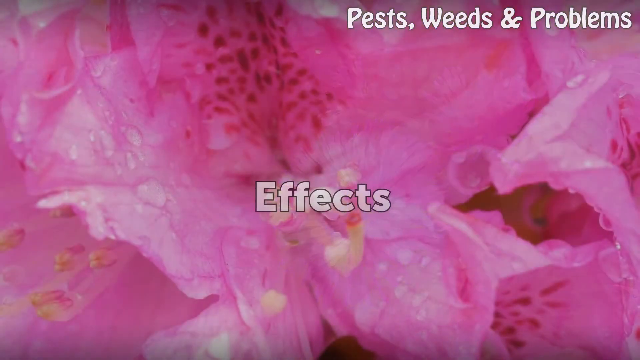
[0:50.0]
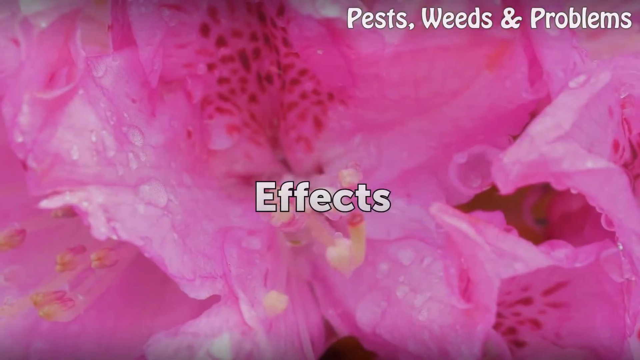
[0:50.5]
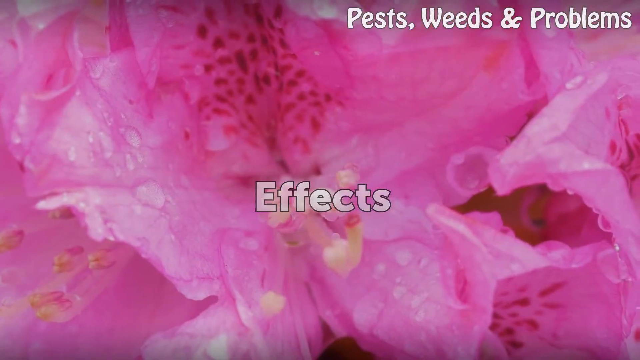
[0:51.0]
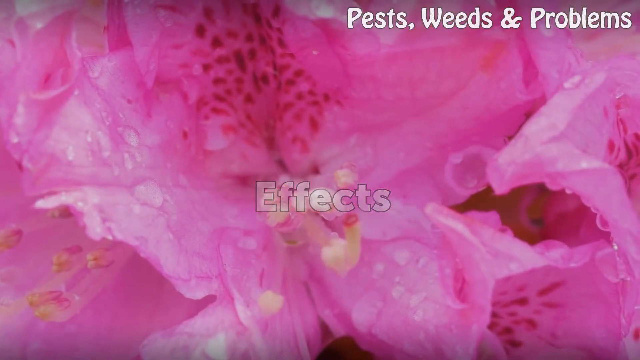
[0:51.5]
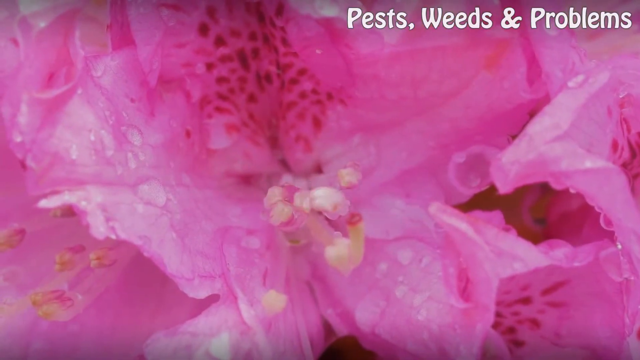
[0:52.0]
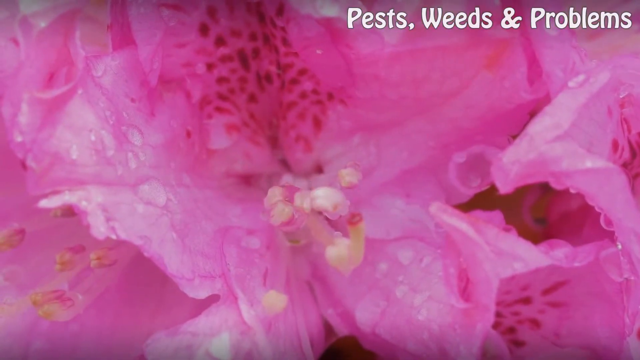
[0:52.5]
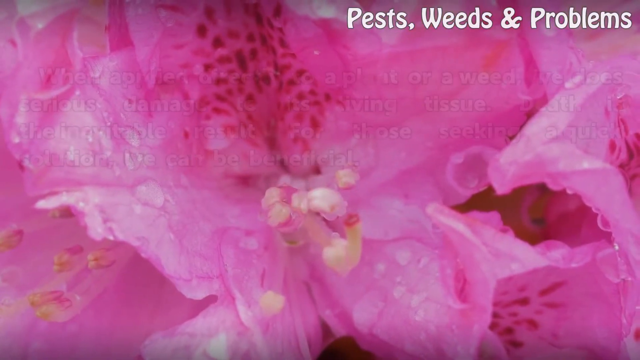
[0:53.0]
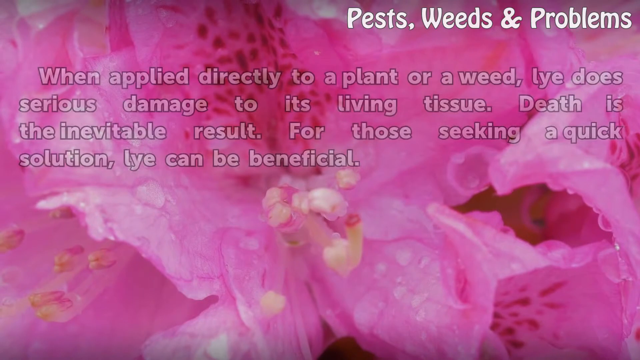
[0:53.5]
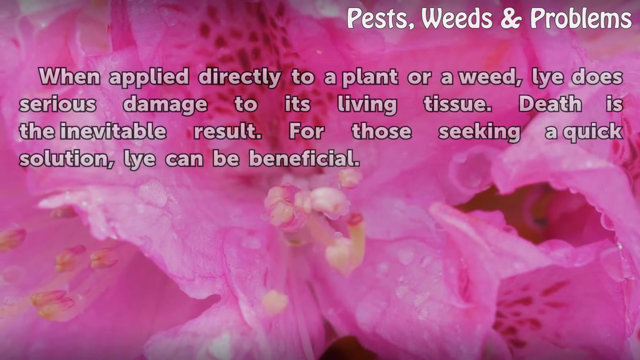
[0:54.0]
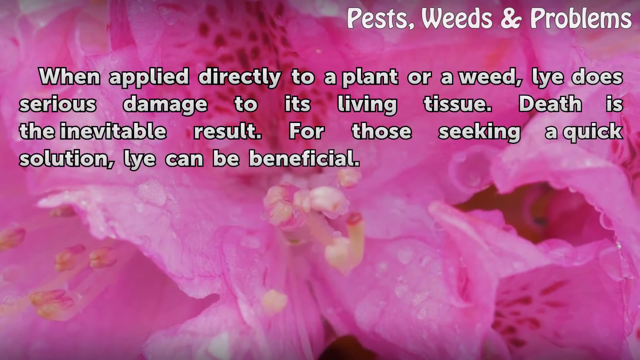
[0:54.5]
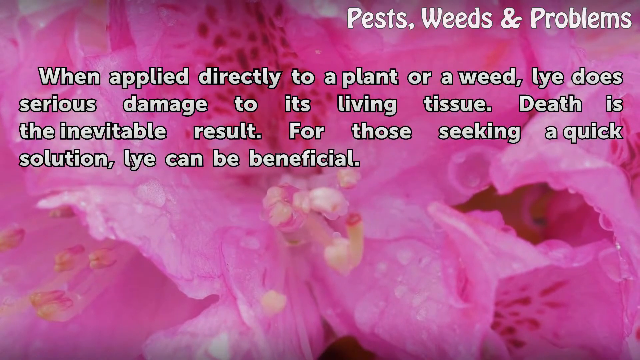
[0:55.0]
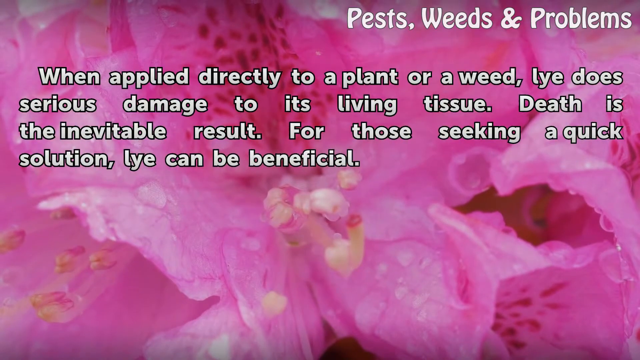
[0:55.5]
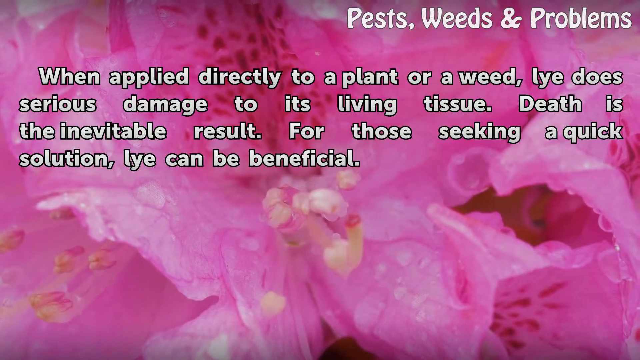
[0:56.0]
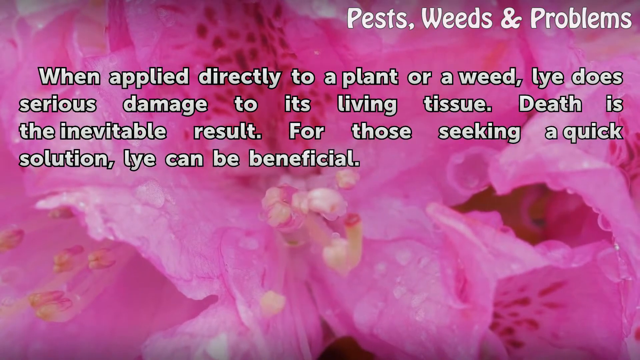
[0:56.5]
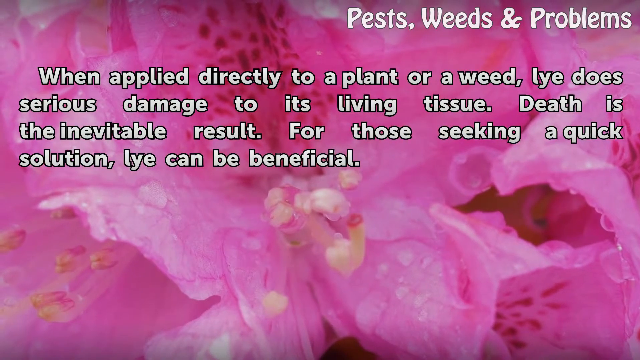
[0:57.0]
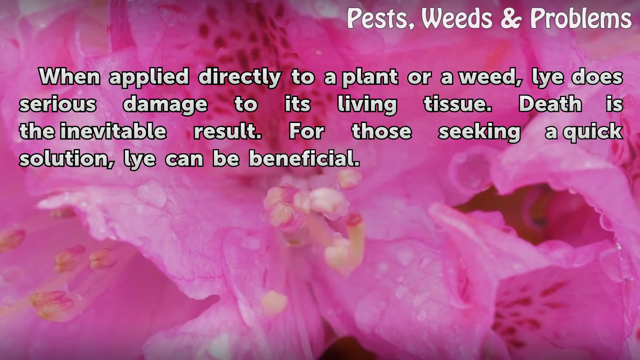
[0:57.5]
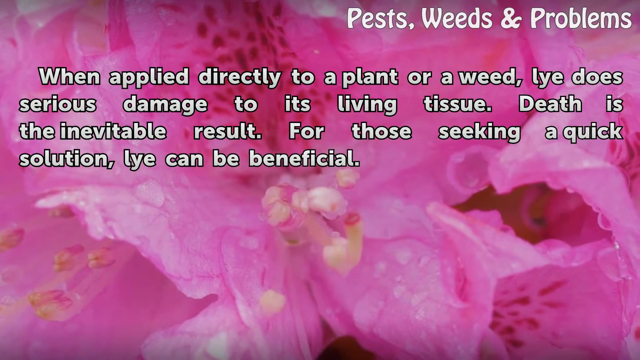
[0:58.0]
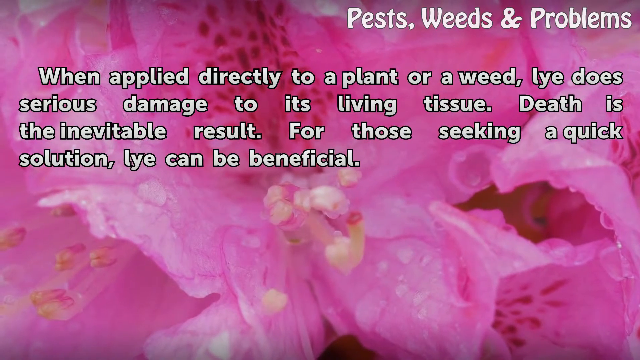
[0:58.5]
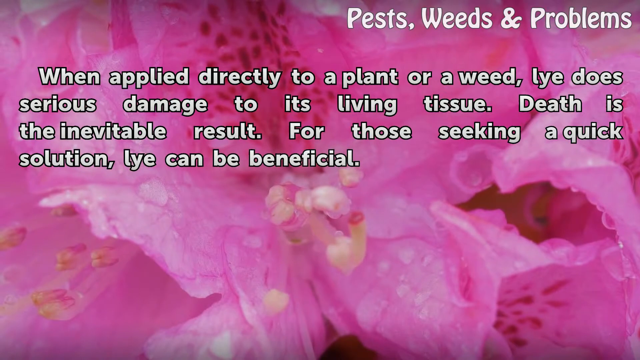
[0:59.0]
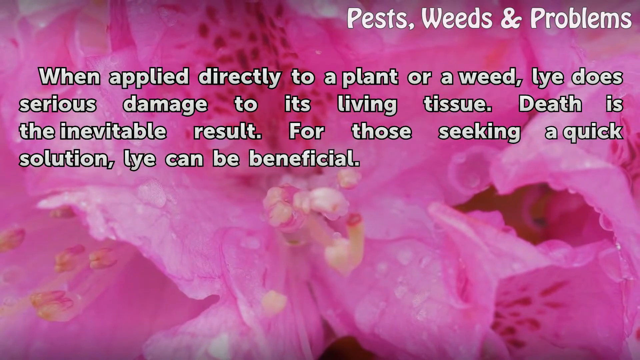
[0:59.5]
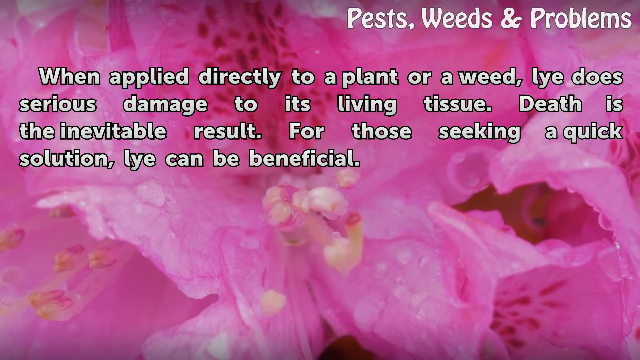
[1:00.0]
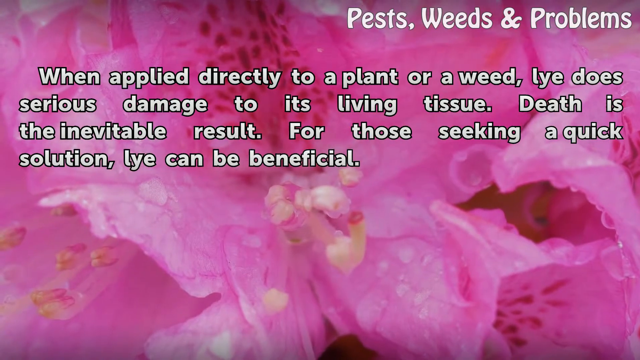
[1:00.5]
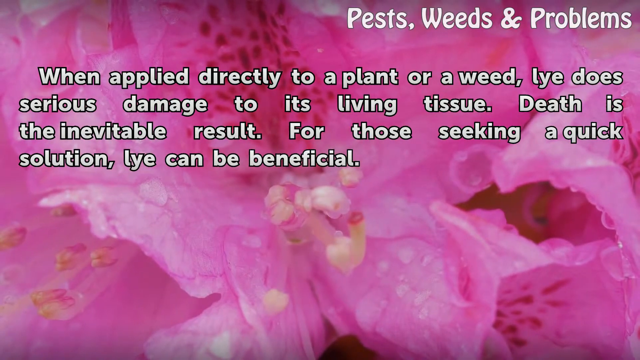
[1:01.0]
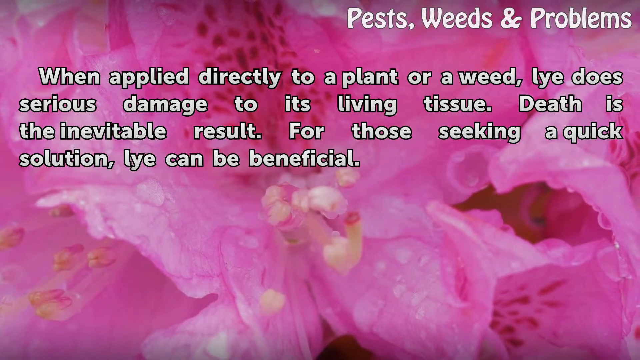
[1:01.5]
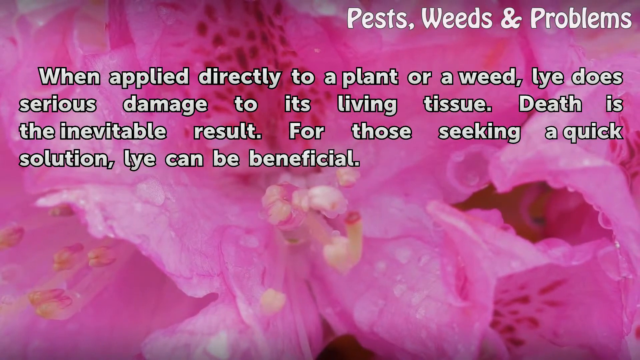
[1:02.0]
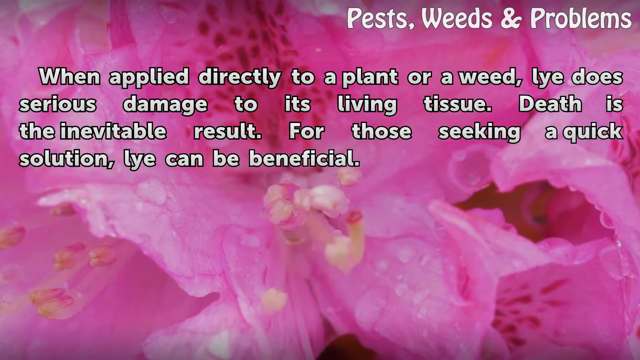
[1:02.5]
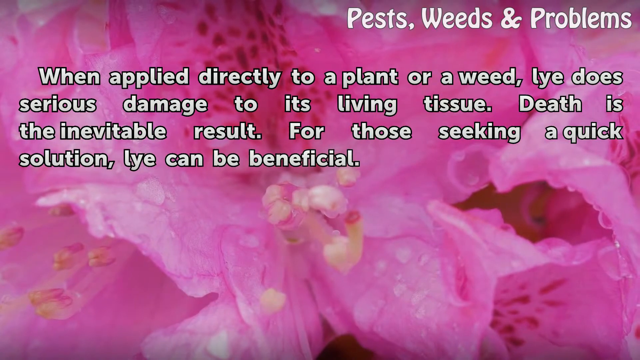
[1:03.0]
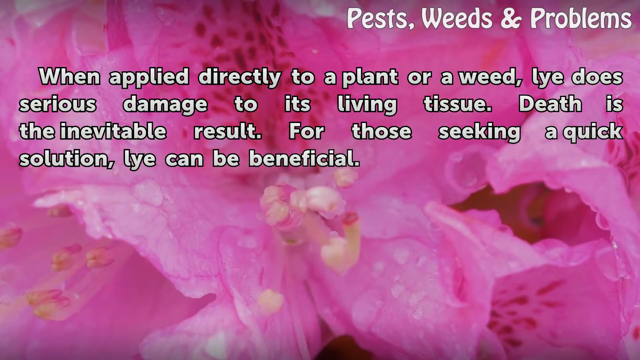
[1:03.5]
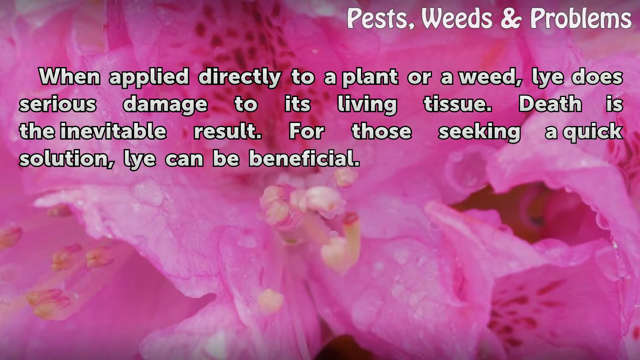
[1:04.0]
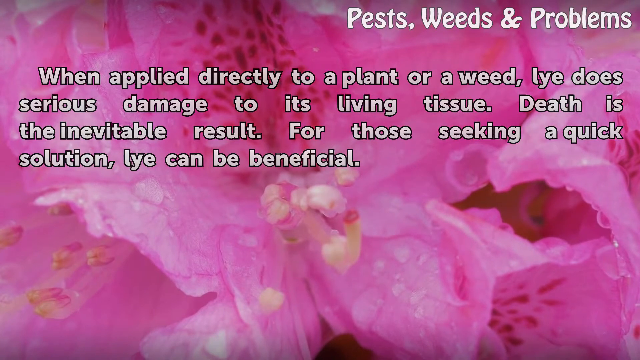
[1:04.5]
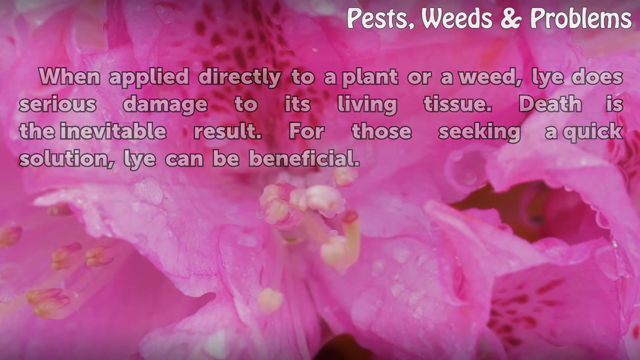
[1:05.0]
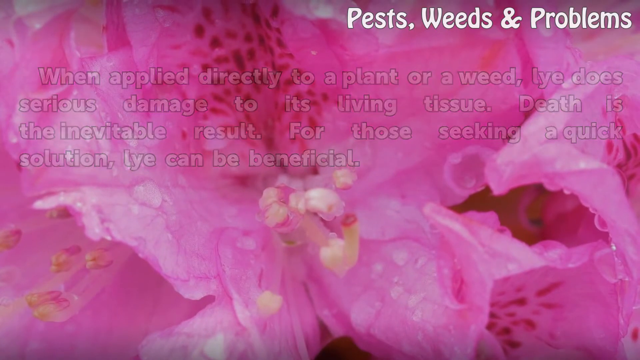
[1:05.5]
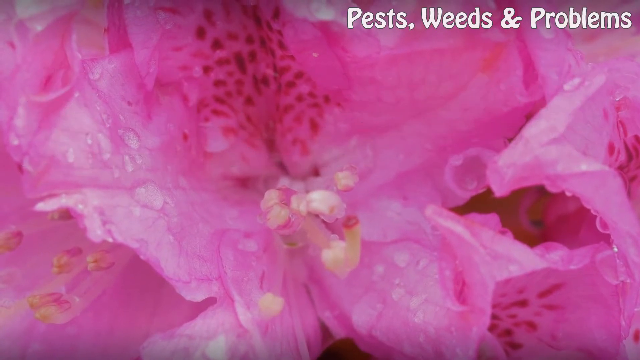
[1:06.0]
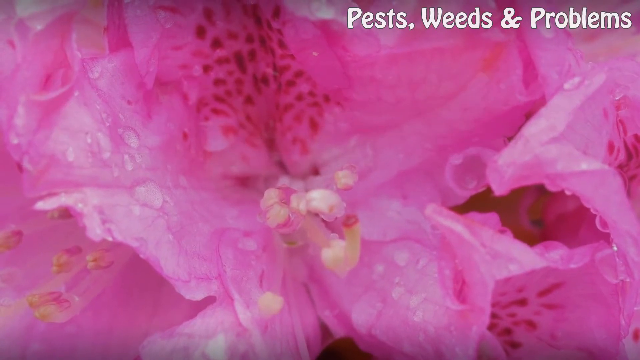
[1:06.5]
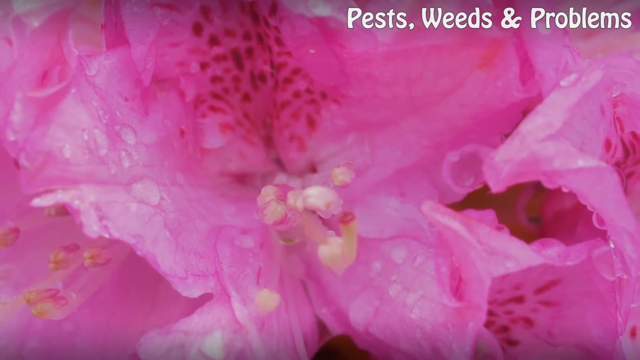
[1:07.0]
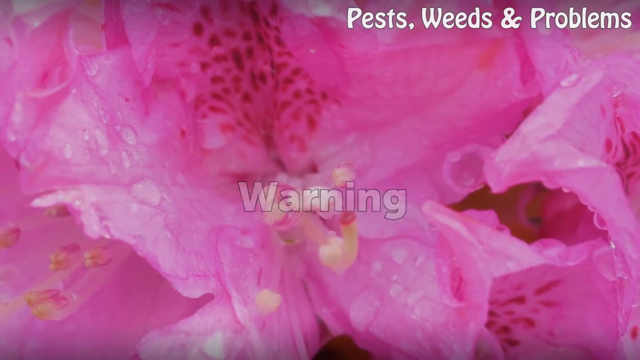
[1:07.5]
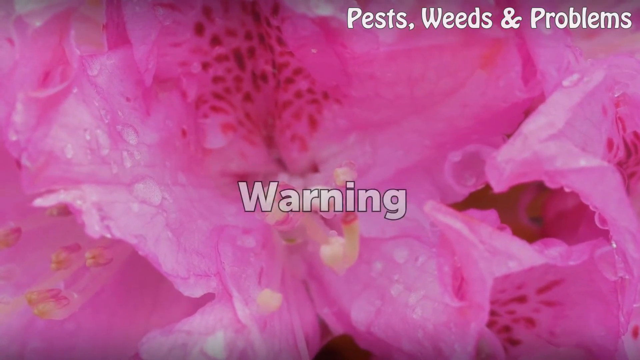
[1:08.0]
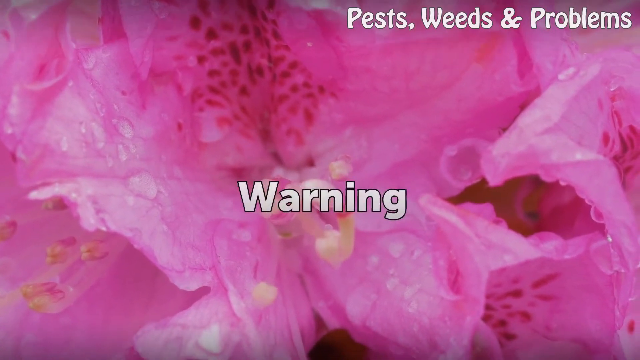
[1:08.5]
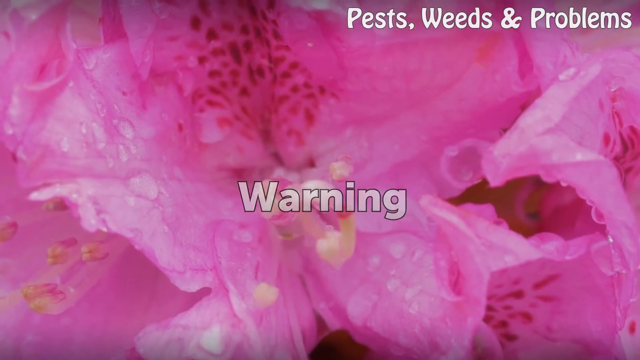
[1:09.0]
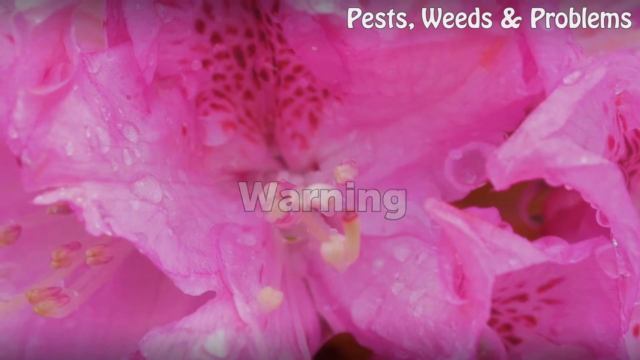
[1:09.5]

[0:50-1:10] The "effects" title gradually appears on the screen before fading away, replaced by justified white text with a black border along the top of the screen reading "When applied directly to a plant or weed, lye does serious damage to the living tissue. Death is the inevitable result. For those seeking a quick solution, lye can be beneficial." This text fades away while the background image moves slightly from left to right. A "warning" title then fades onto the screen as the background keeps moving slightly from left to right, before the warning text fades away. The video appears to be a guide on using lye, with text covering what lye is, when it can be used, its effects and the precautions needed.